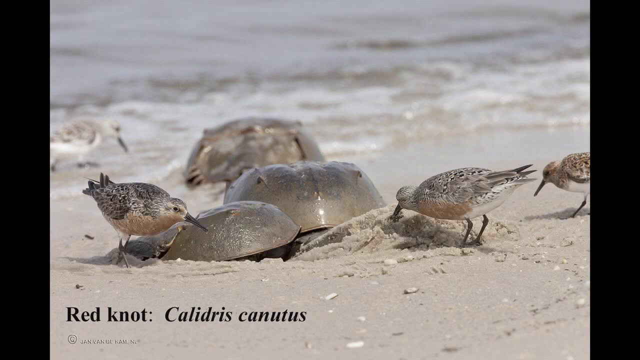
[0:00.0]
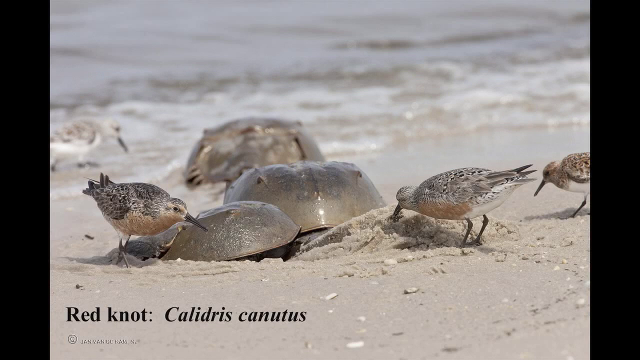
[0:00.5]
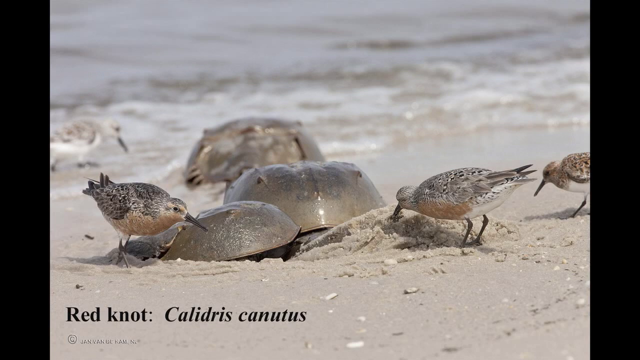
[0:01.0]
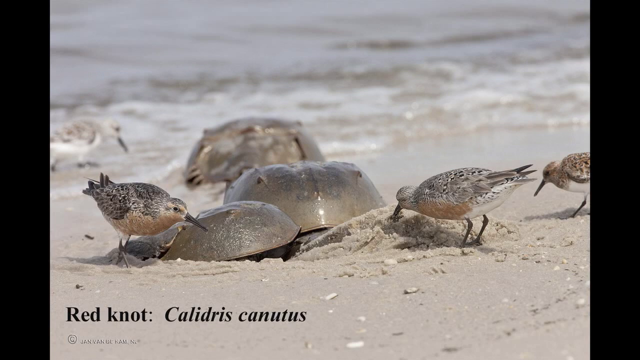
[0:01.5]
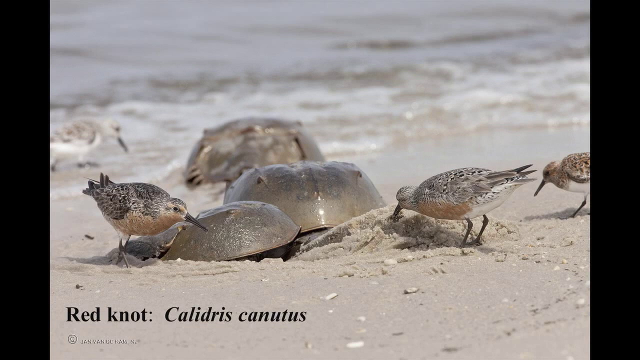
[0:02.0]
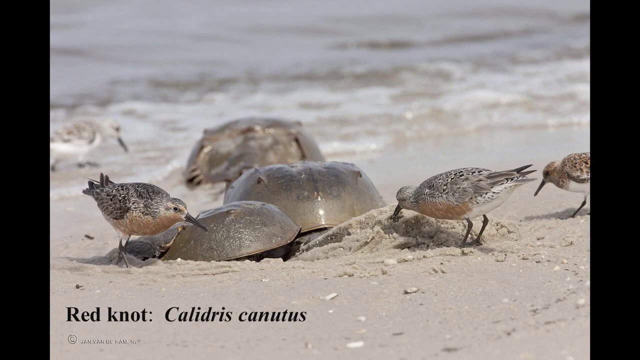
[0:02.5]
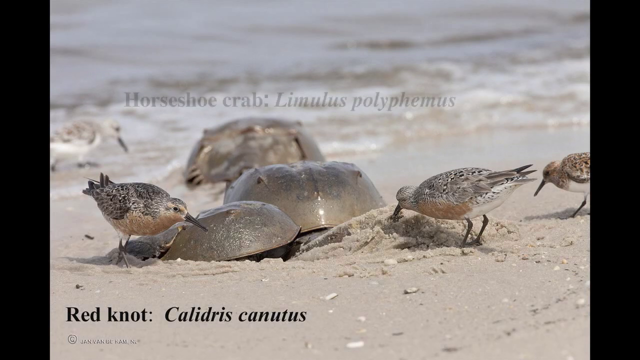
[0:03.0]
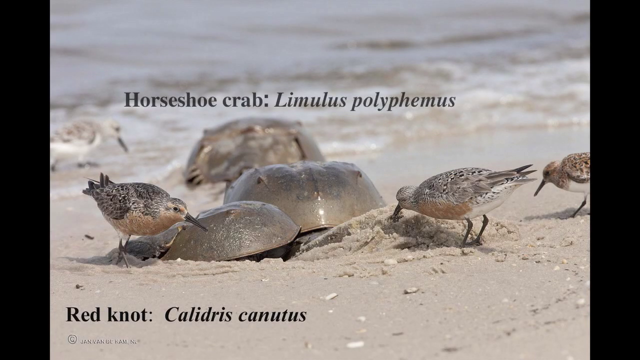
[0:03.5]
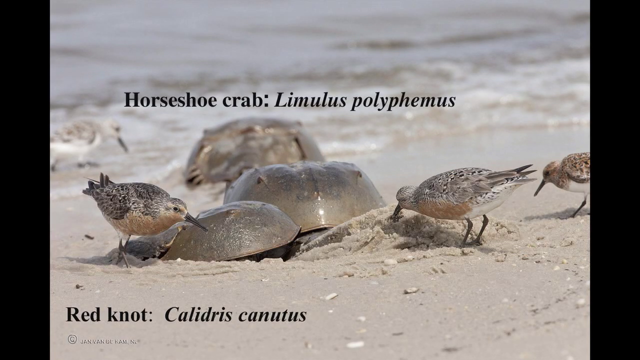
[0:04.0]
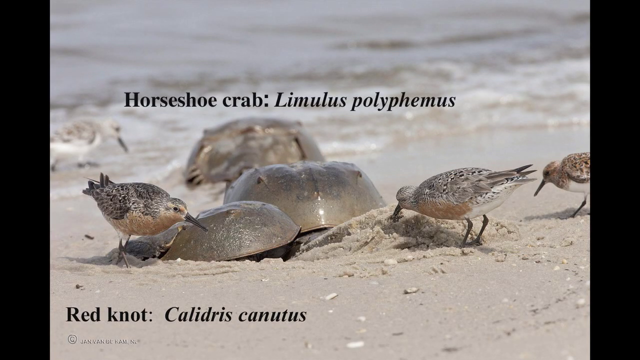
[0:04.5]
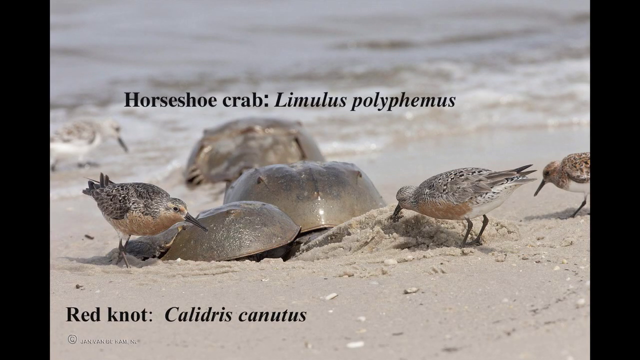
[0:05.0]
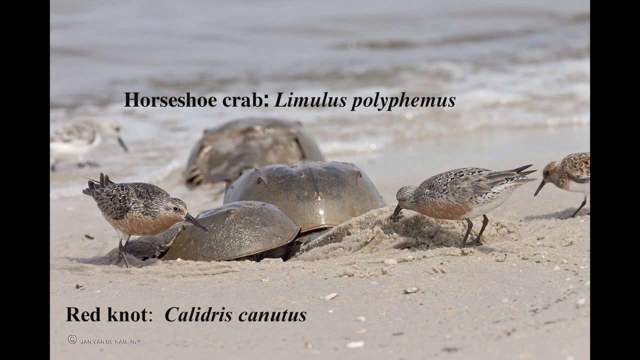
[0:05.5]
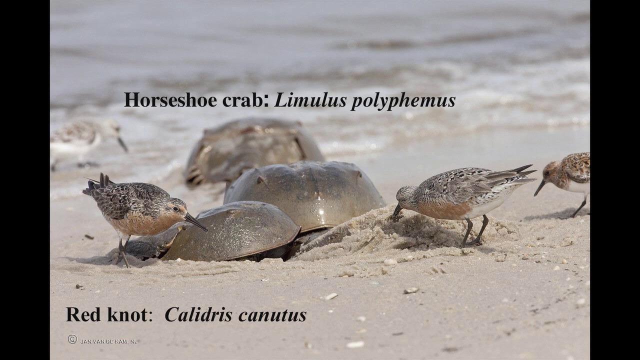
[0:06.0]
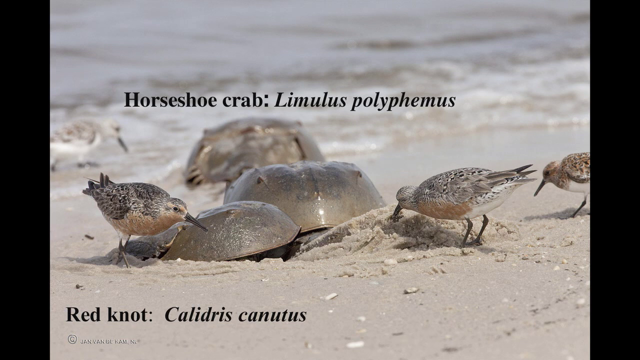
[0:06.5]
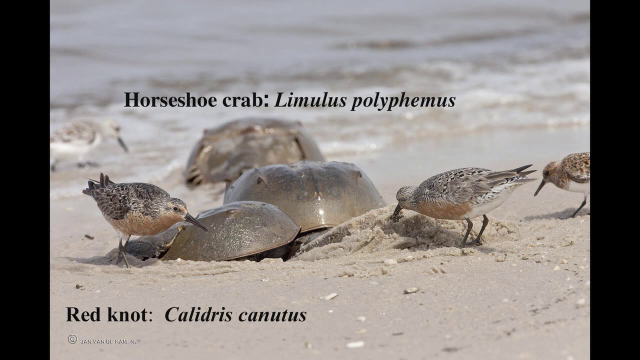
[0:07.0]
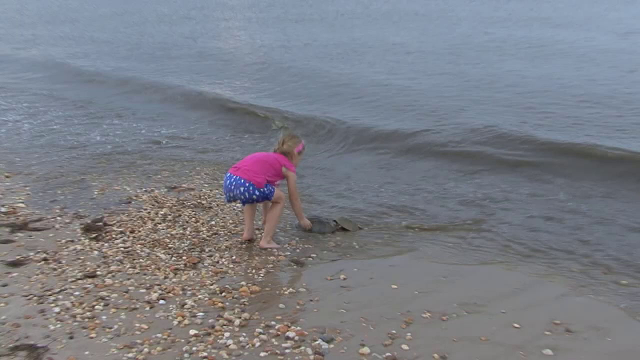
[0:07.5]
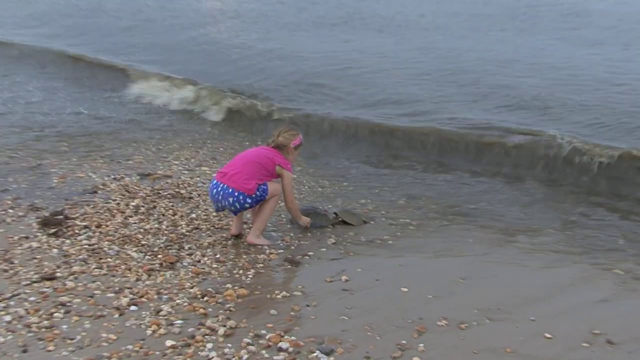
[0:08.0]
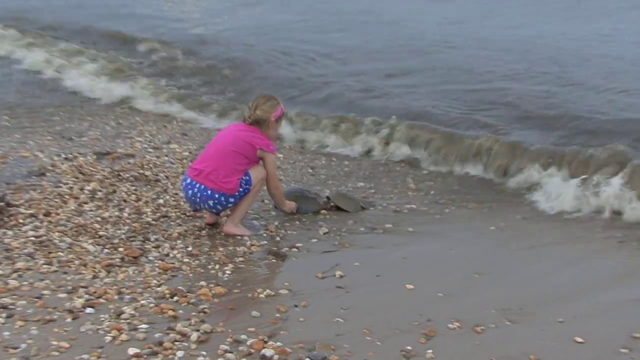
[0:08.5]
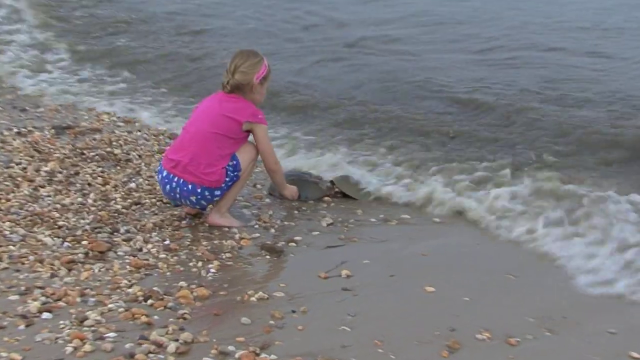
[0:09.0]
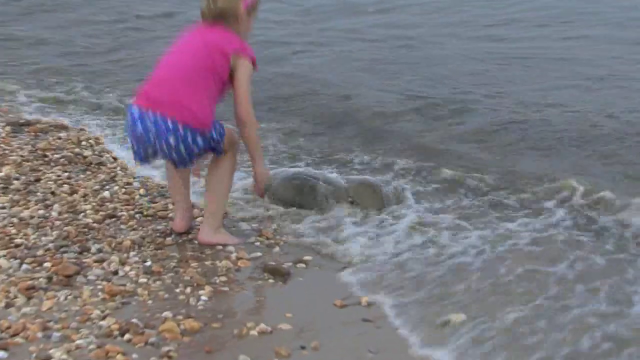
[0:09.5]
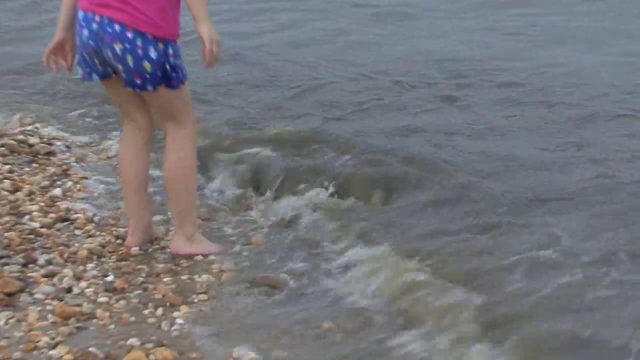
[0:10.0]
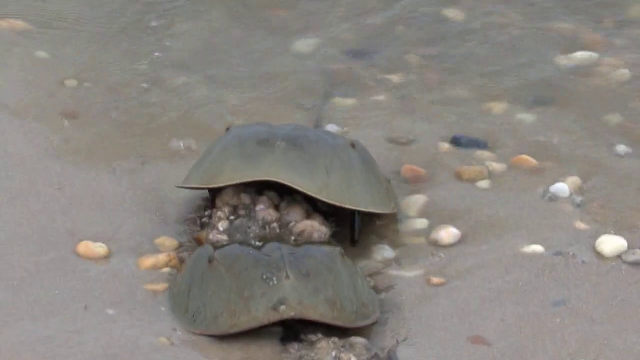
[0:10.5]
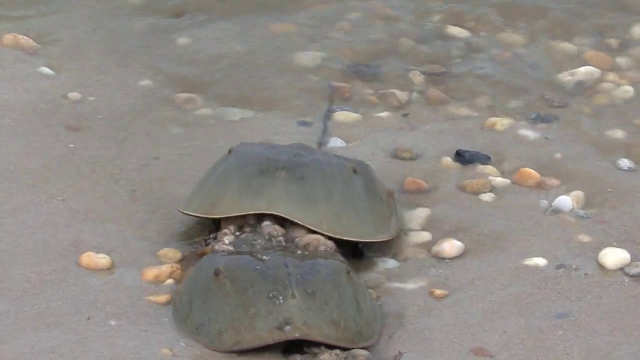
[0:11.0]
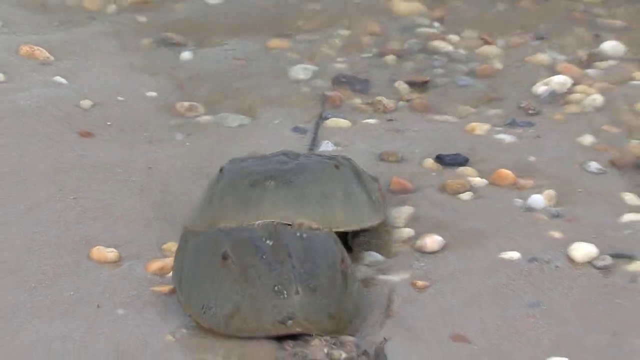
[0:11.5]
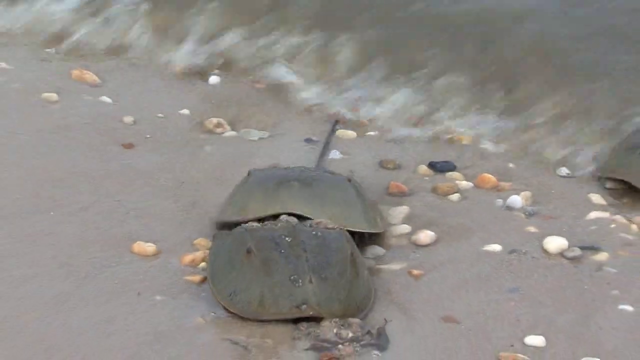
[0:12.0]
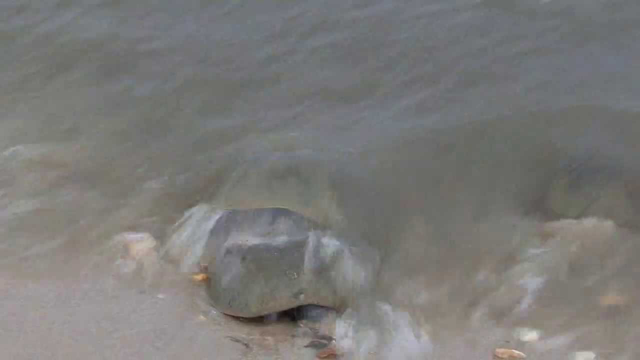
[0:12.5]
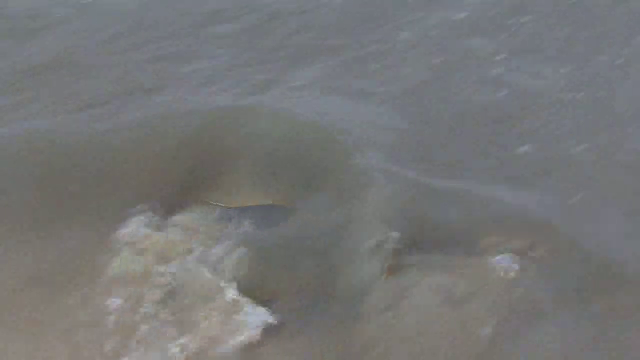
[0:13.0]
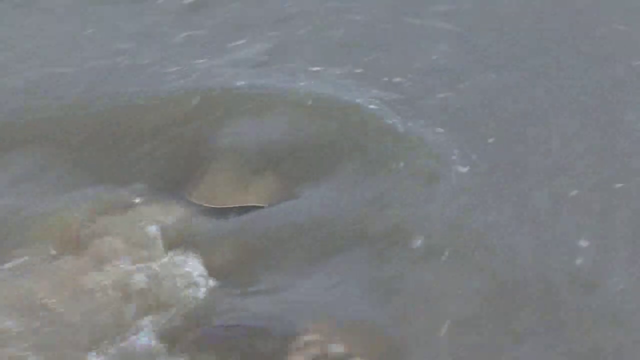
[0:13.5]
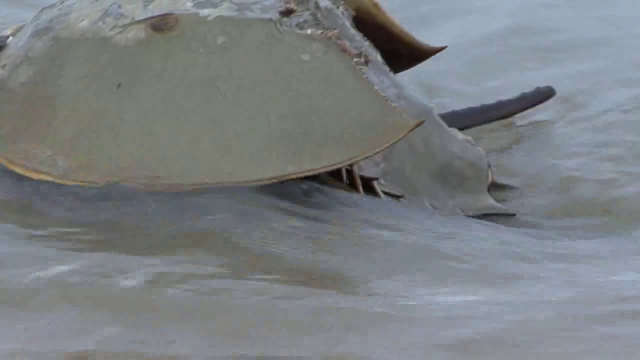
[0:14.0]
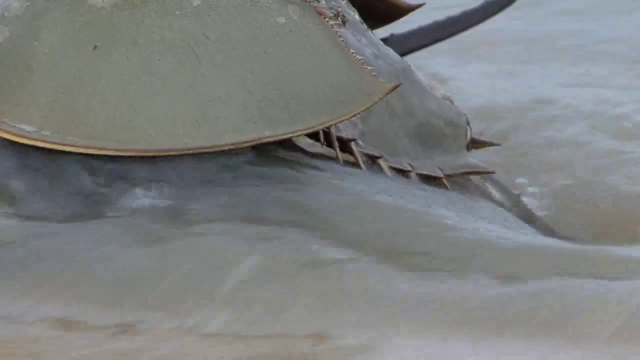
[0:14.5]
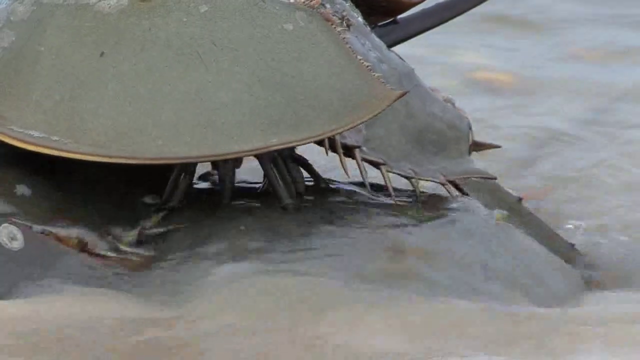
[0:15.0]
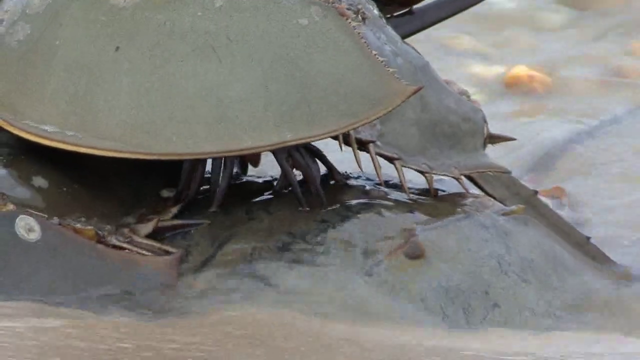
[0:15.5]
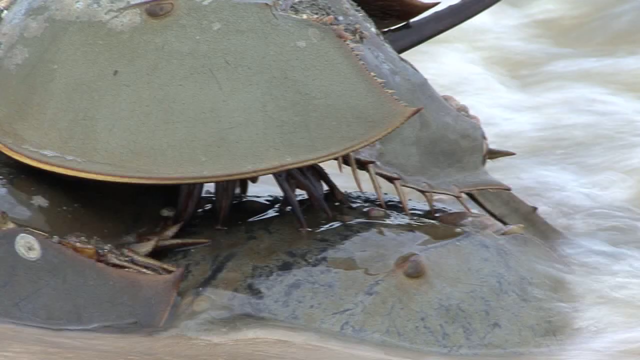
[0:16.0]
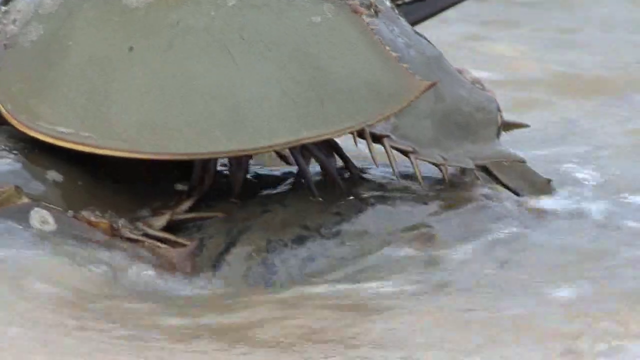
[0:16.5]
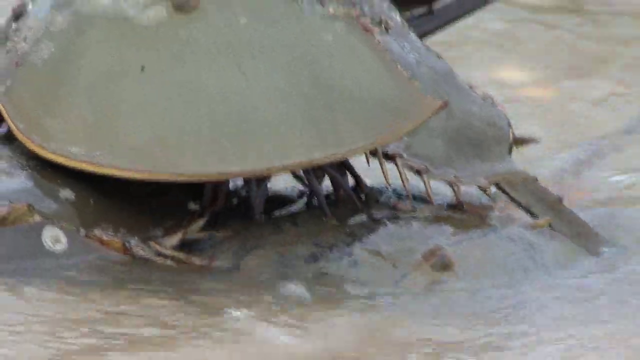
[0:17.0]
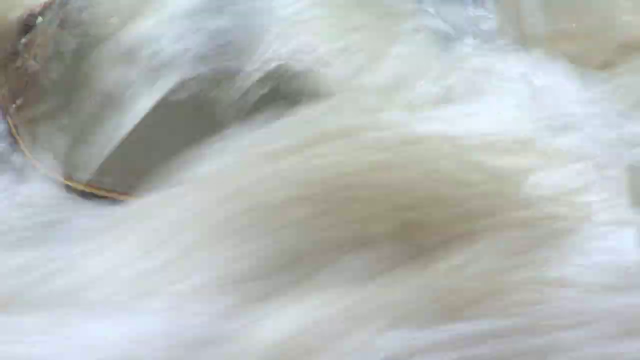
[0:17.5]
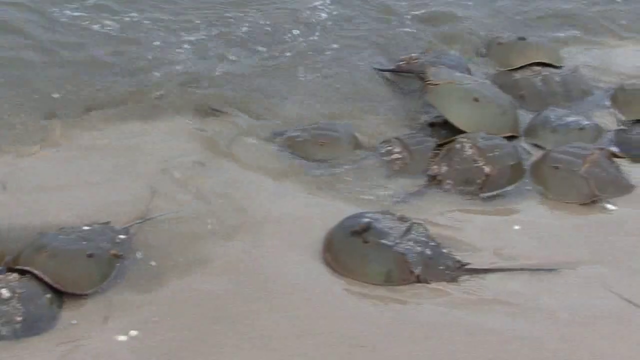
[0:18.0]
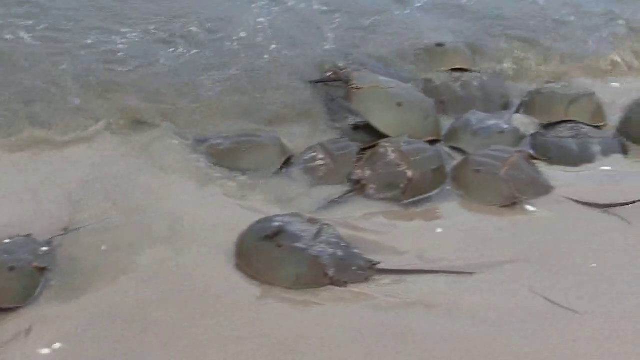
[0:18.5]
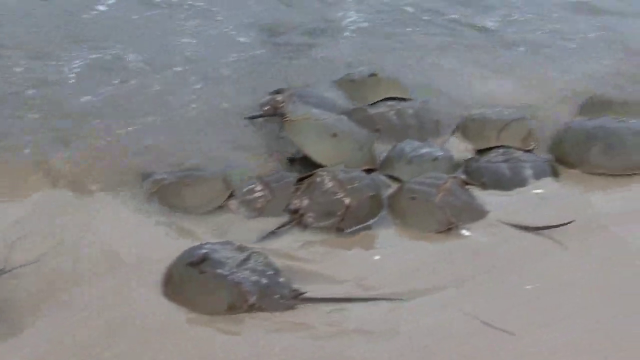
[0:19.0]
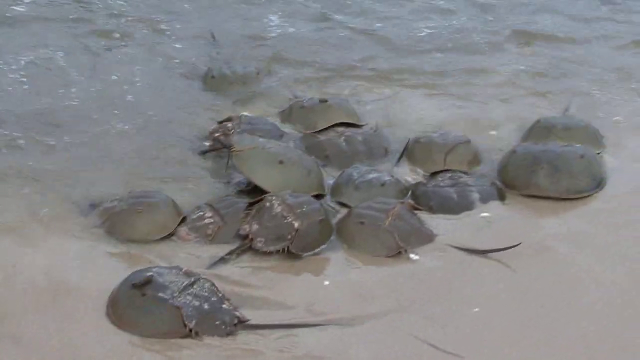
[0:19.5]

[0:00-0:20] Red knot birds stand on a sandy beach, surrounded by horseshoe crabs (Limulus polyphemus). The scene cuts to a little girl playing with the horseshoe crabs by the shore. There are small rocks on the sand, and she appears to pick up one of the horseshoe crabs and put it closer to the water. Two horseshoe crabs are then shown with the tide crashing into them. A close-up of their shell shows what look like little spikes on the side, and they have a long tail. Many horseshoe crabs, maybe 20 or 30, are on this beach close to the water.